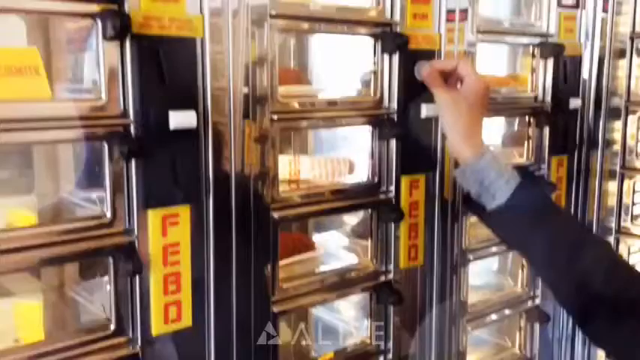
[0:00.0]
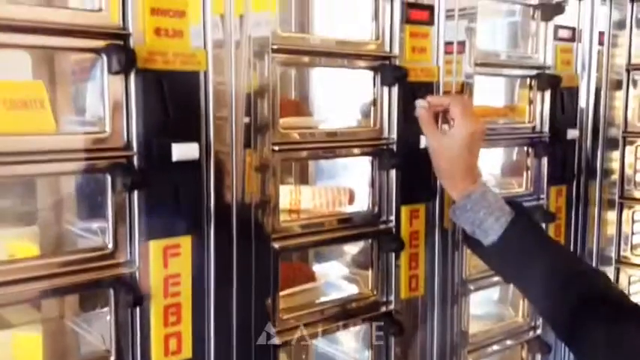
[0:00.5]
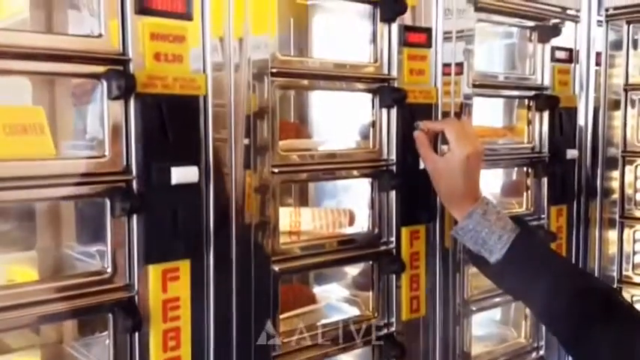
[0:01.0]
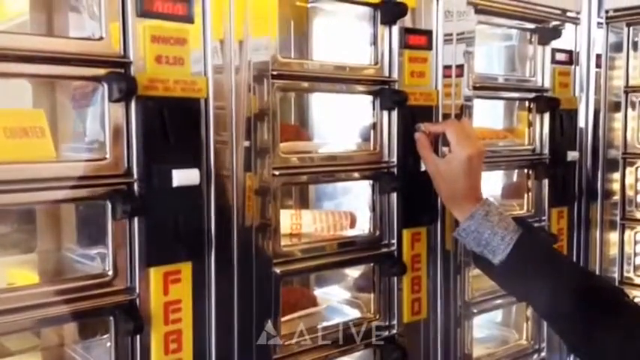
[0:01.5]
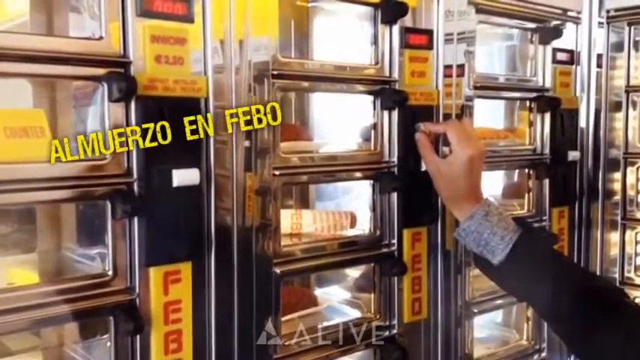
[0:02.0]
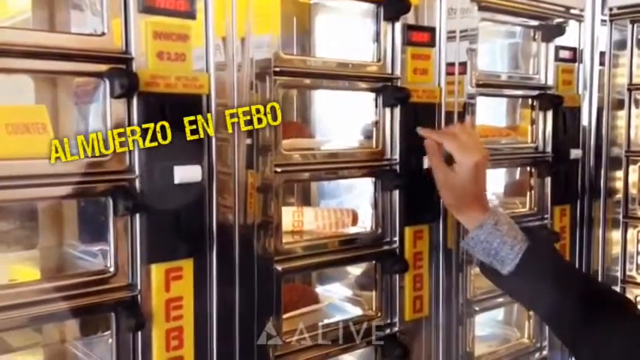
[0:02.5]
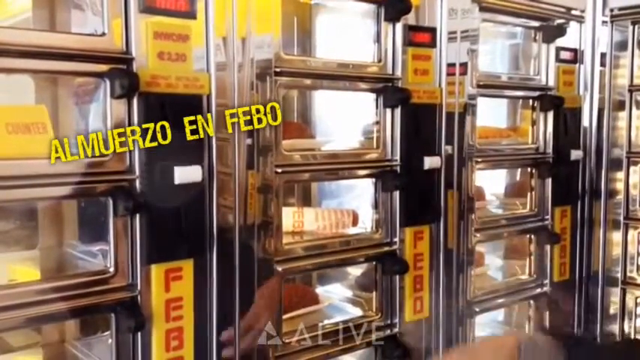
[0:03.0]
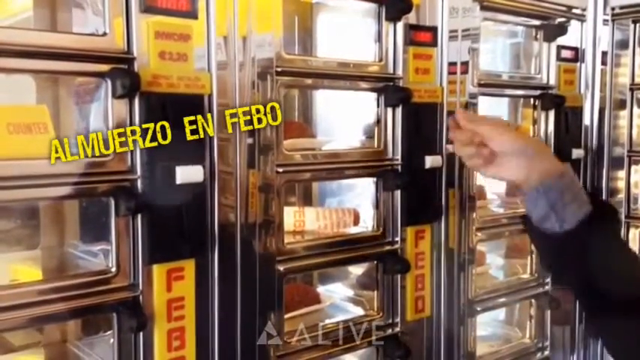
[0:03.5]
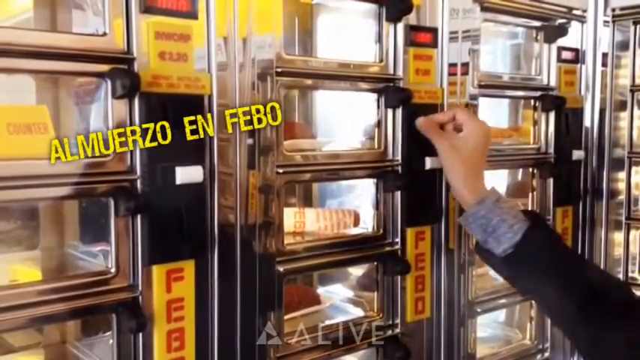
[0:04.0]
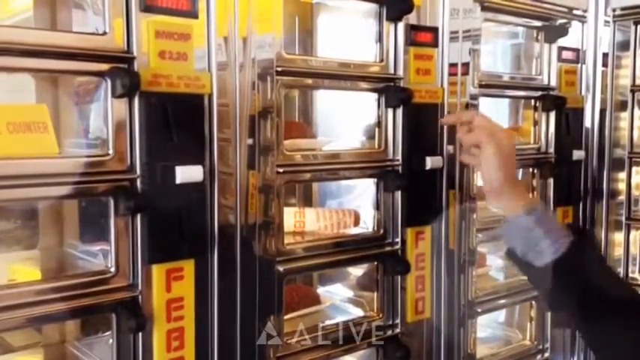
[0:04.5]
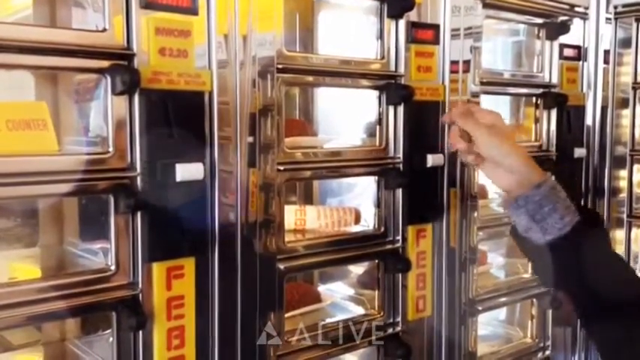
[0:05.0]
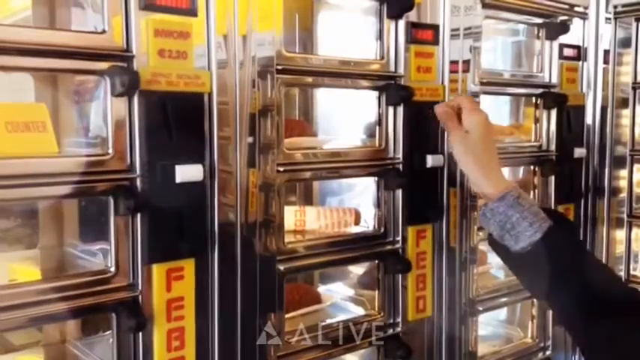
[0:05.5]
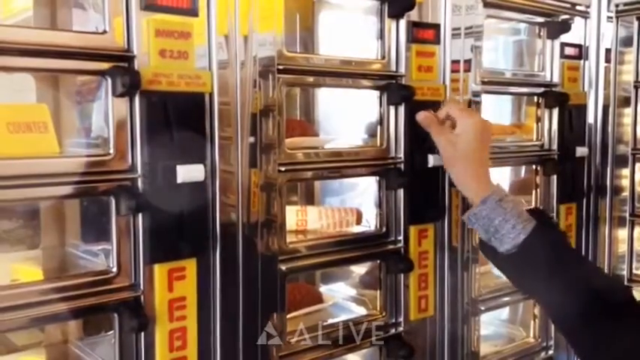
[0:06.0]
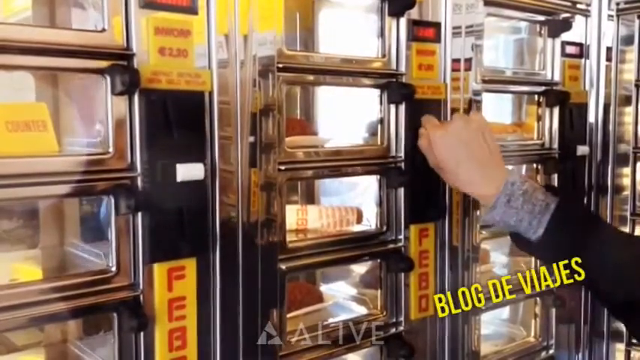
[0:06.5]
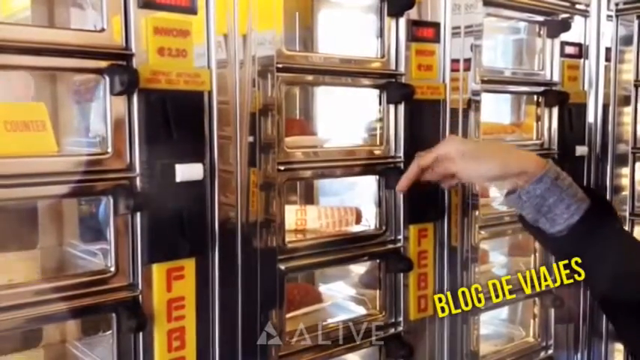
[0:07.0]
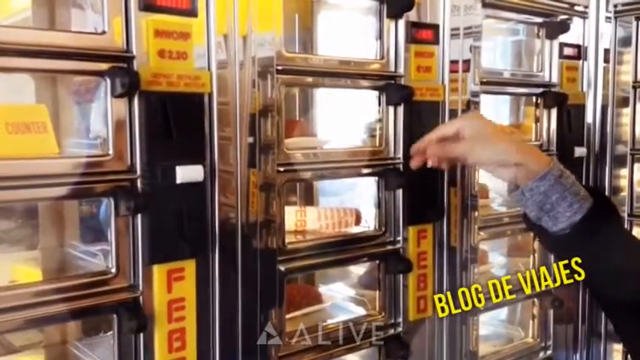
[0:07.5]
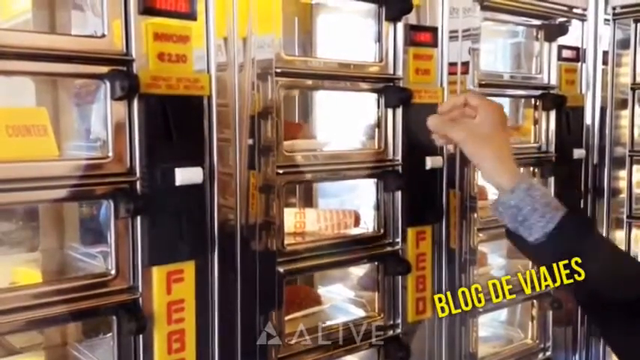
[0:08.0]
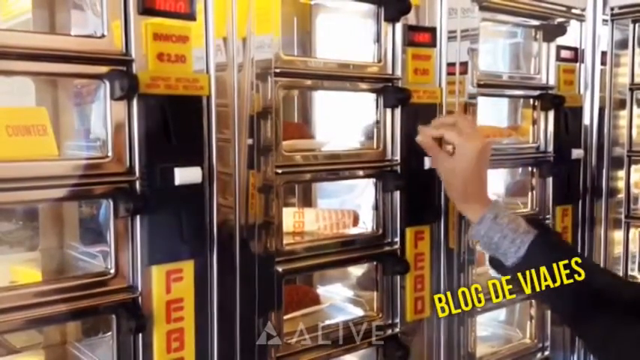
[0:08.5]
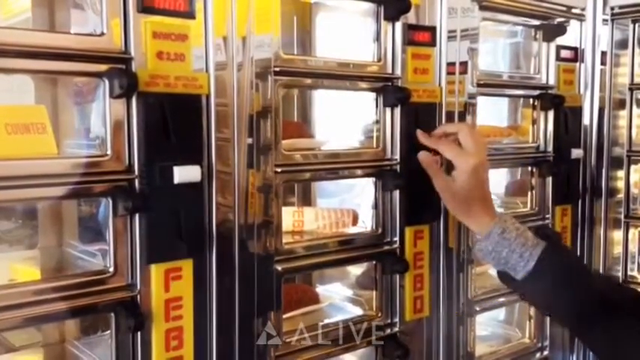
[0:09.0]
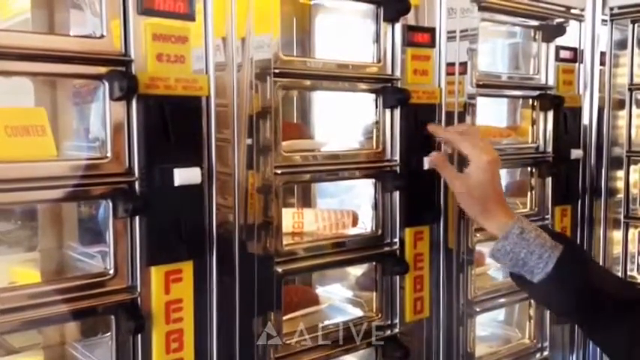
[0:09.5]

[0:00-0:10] A person puts a coin into a machine, and food is visible inside it. They put several coins into the machine. Only the person's hand and arm are visible; they seem to be wearing a black coat, with a long-sleeve gray shirt sticking out at the wrist. The machines look silver and have little doors with windows in them, through which food wrapped in paper can be seen. On one of them there is a picture.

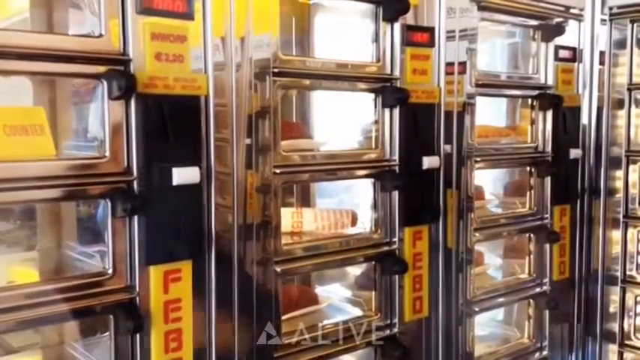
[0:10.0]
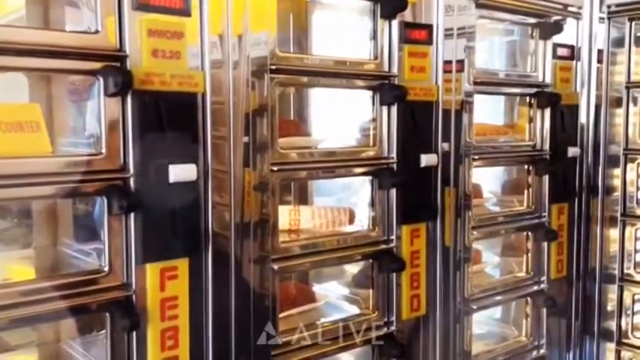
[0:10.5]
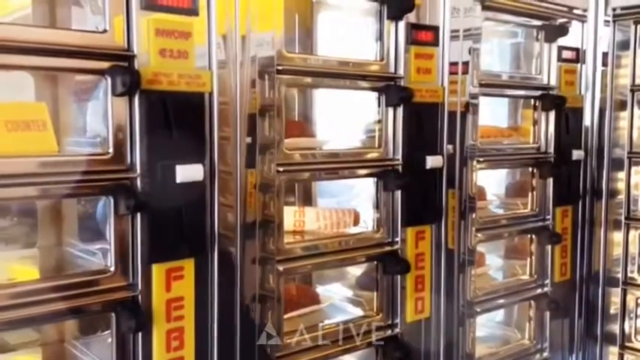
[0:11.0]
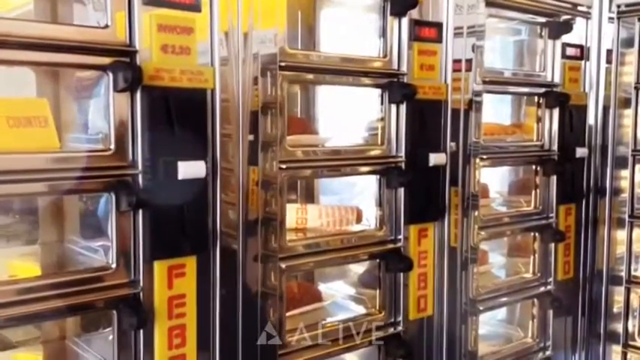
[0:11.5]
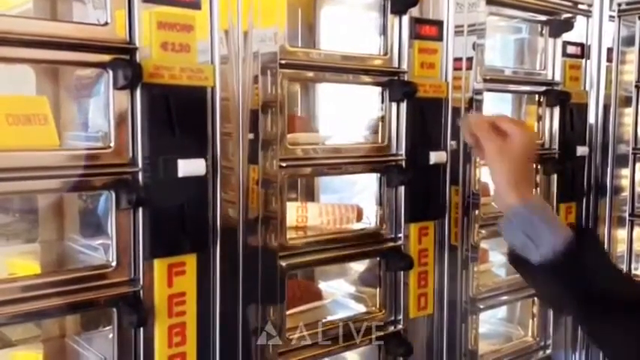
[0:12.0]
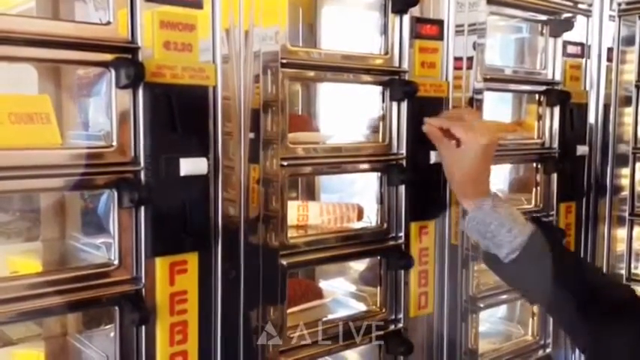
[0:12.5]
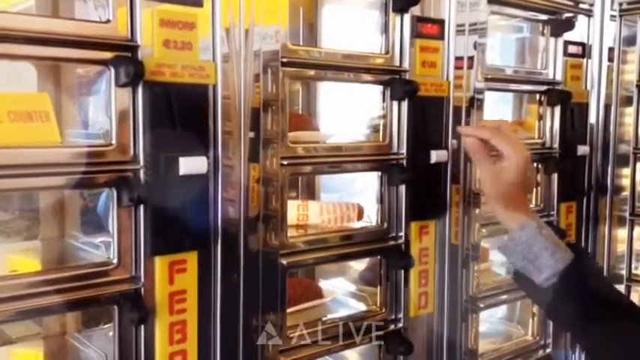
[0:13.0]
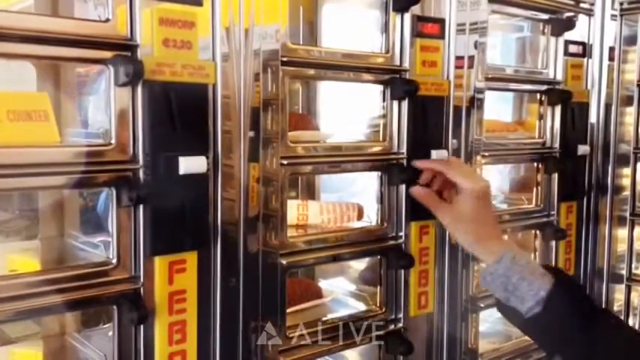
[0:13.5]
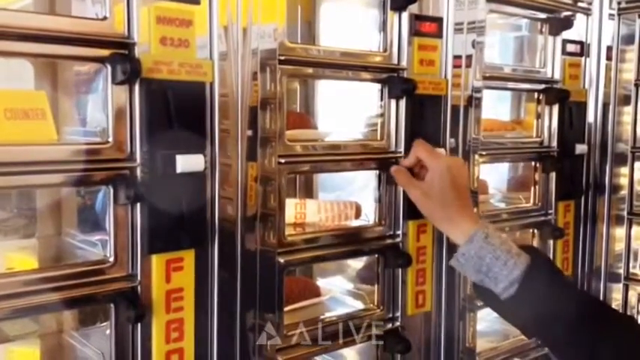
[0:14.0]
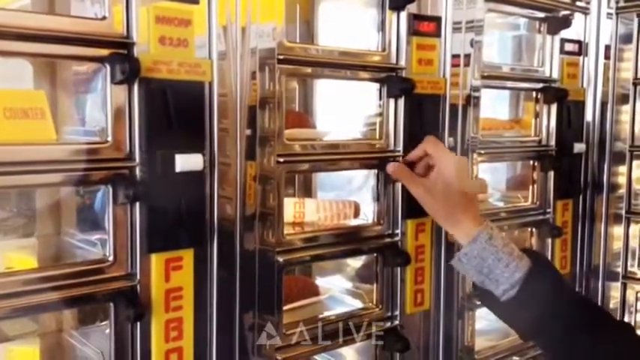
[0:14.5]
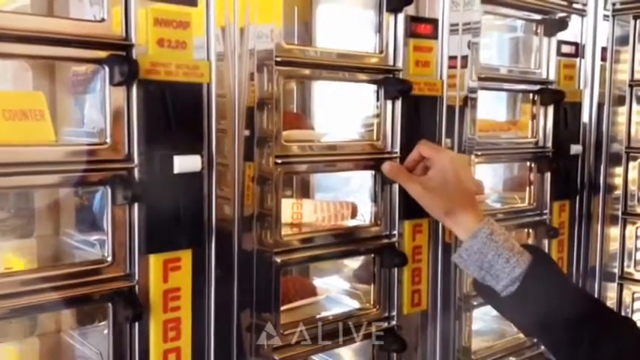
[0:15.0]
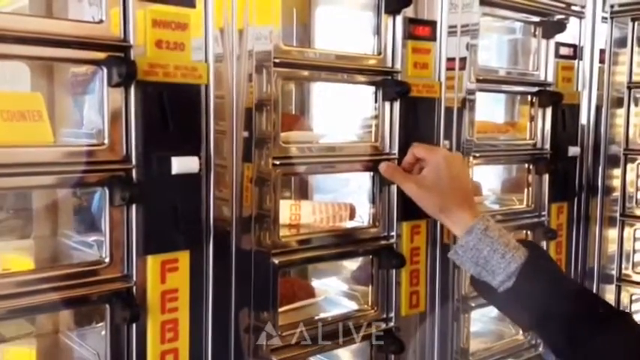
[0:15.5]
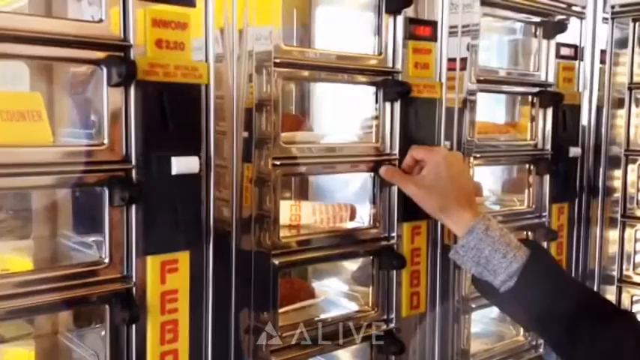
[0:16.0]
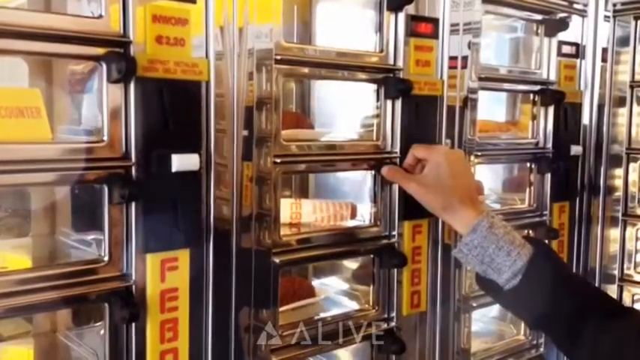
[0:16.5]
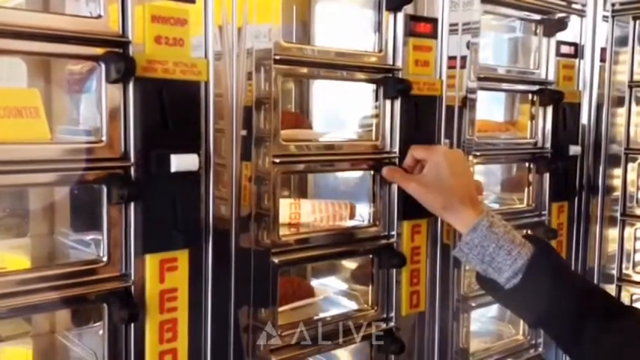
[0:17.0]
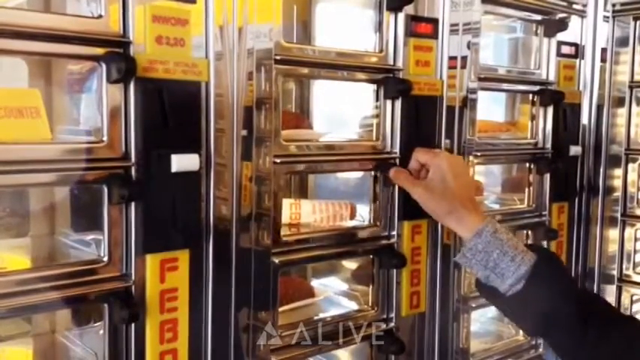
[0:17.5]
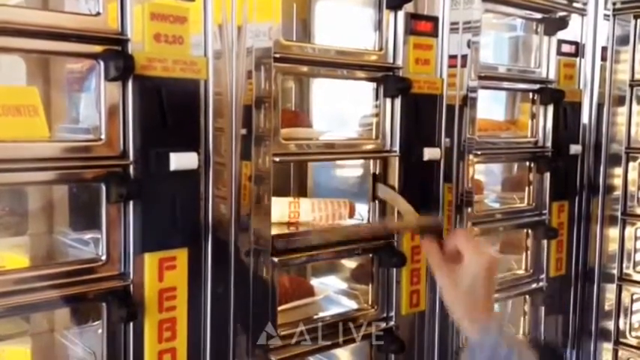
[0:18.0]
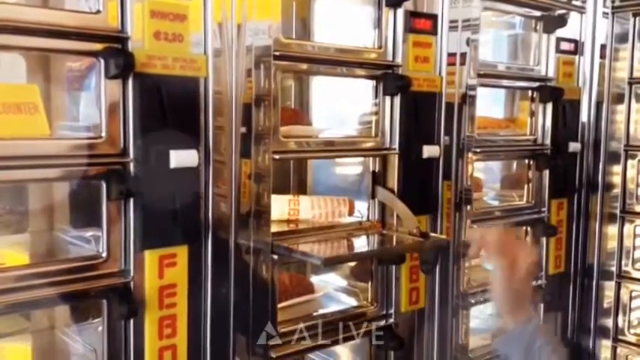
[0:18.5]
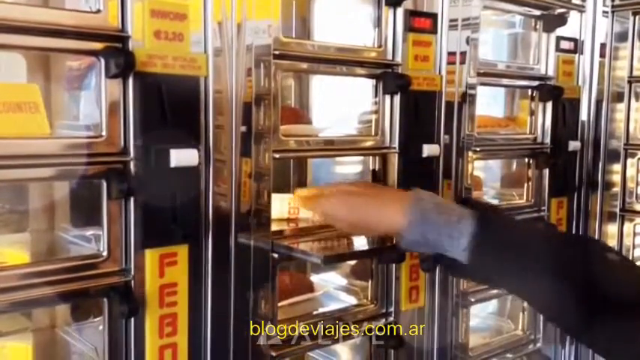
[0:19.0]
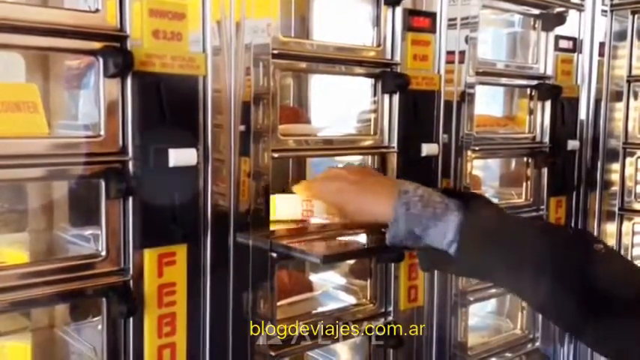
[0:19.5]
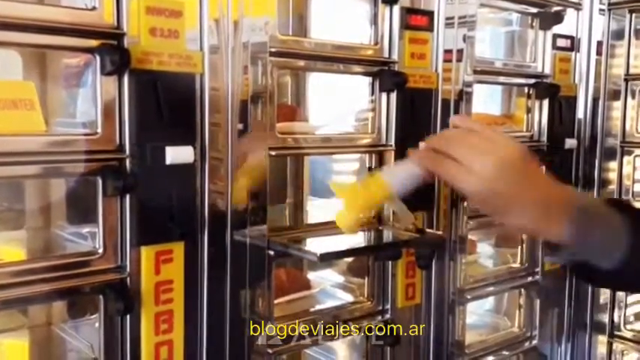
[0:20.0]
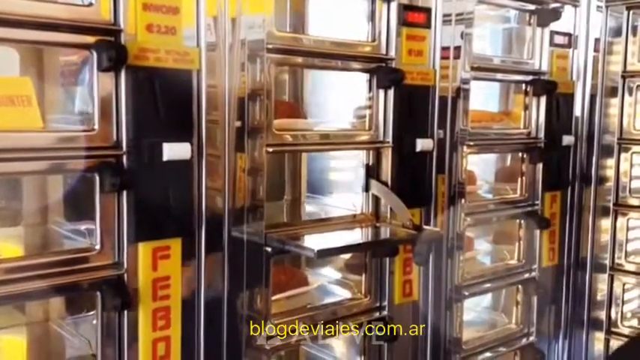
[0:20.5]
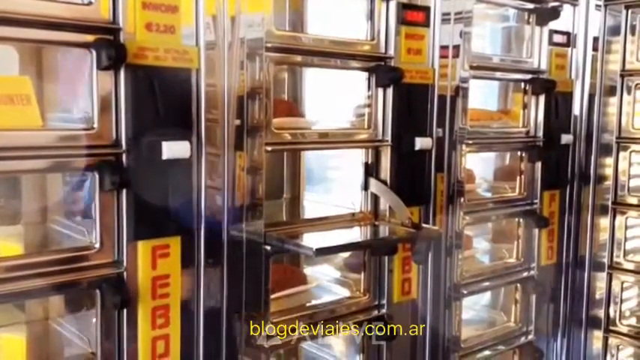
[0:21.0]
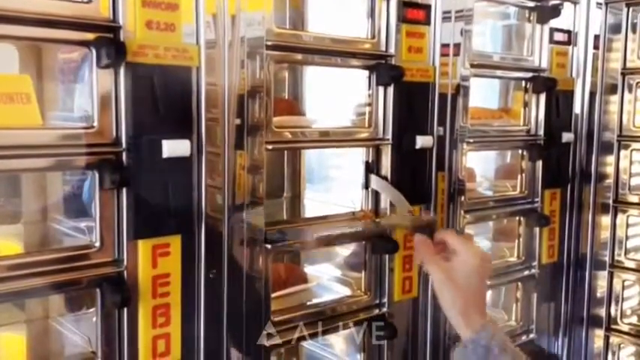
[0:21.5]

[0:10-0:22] What looks like a vending machine is silver and has a lot of doors. A whole bunch of them are stacked next to each other in rows, each with at least four doors. A person puts a coin into the vending machine, then grabs the door's black handle, holds it and folds it down. Inside is what looks like food wrapped in paper that is white with red letters on it. The person grabs the food item and then closes the door.